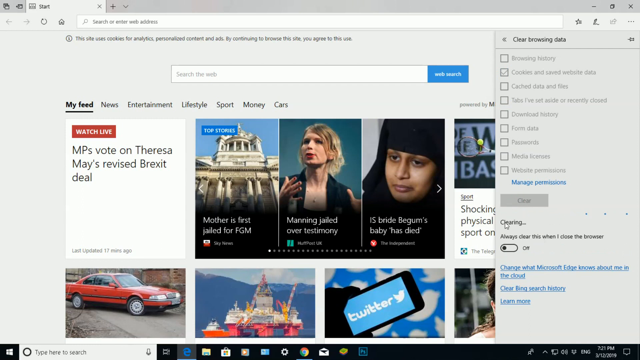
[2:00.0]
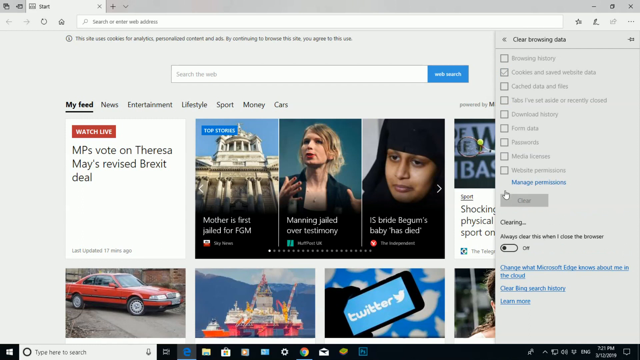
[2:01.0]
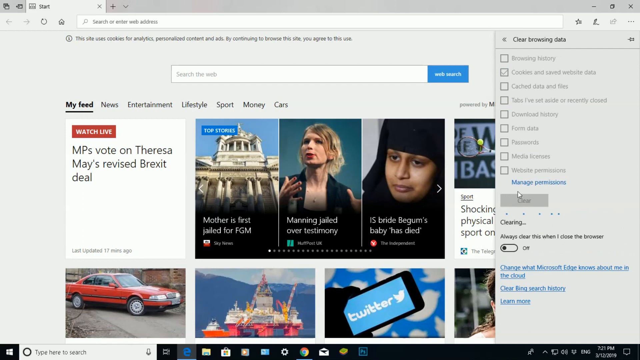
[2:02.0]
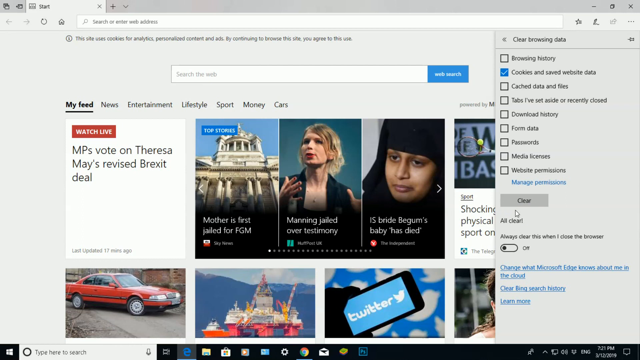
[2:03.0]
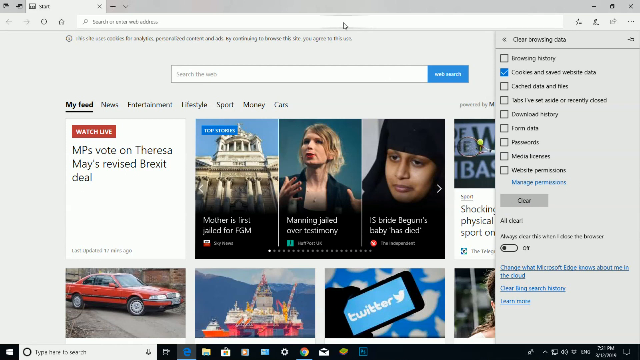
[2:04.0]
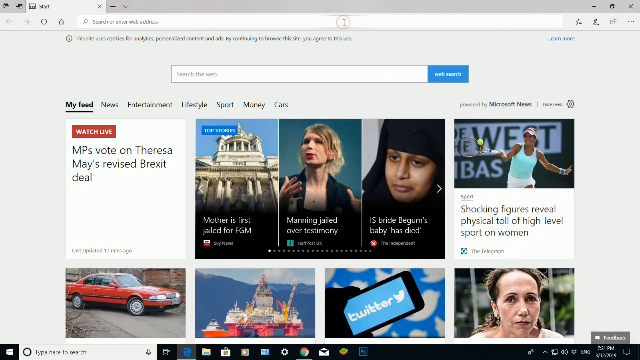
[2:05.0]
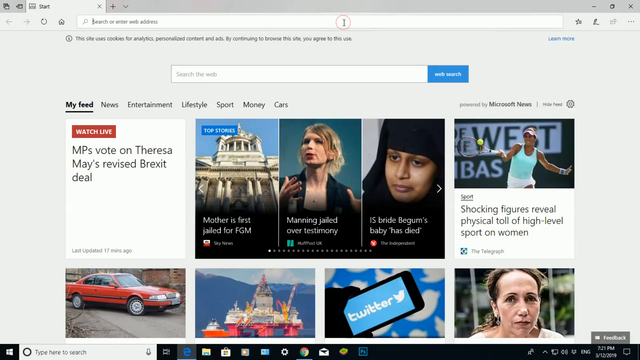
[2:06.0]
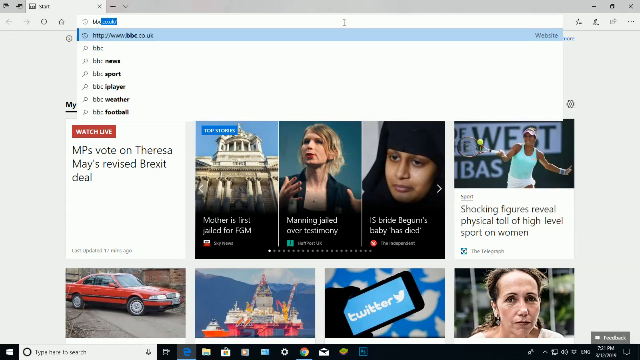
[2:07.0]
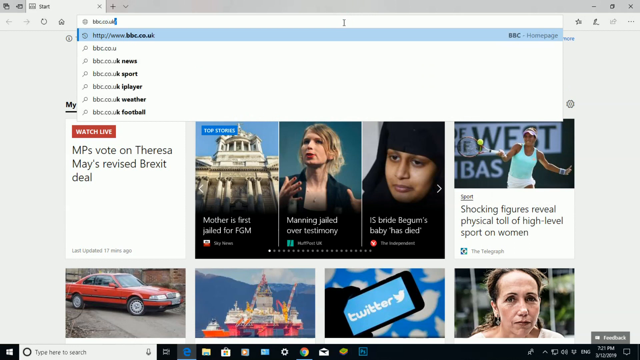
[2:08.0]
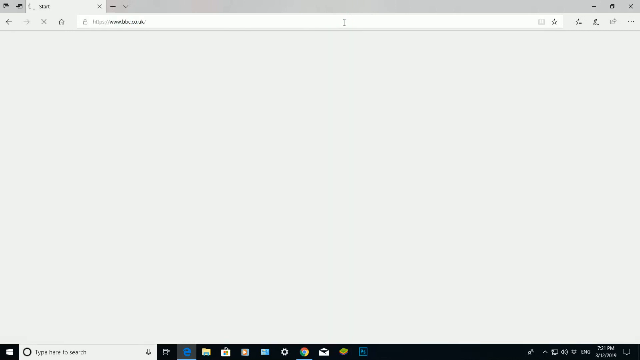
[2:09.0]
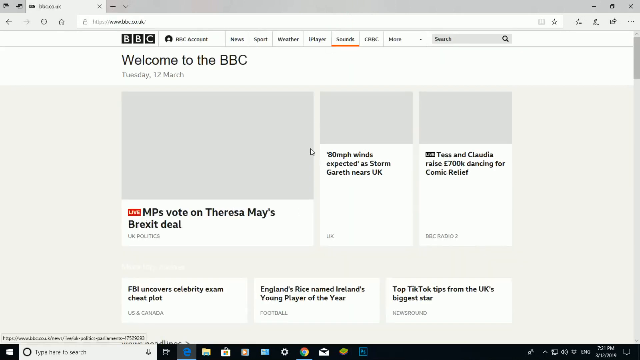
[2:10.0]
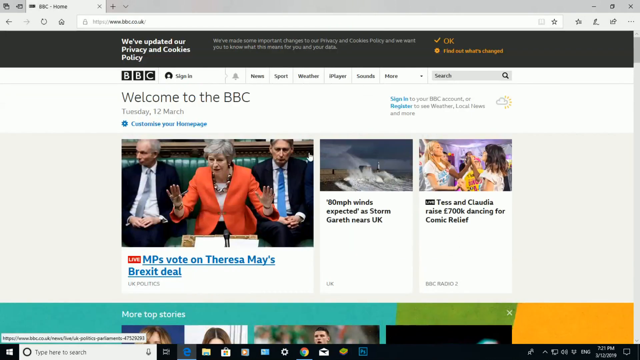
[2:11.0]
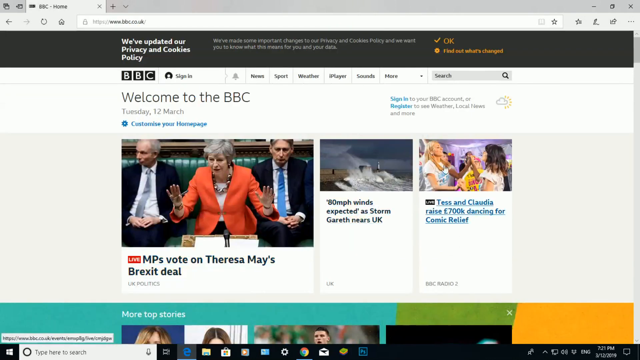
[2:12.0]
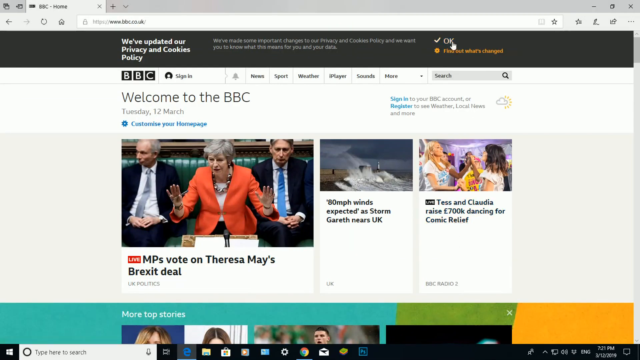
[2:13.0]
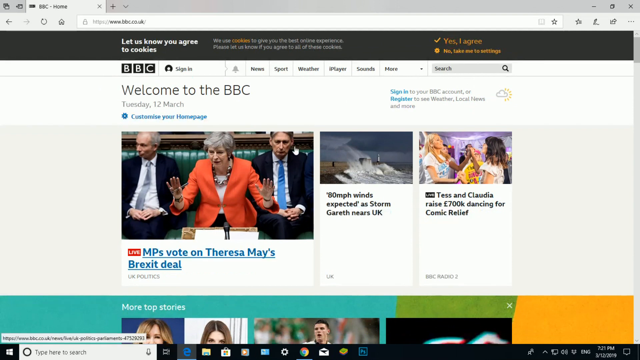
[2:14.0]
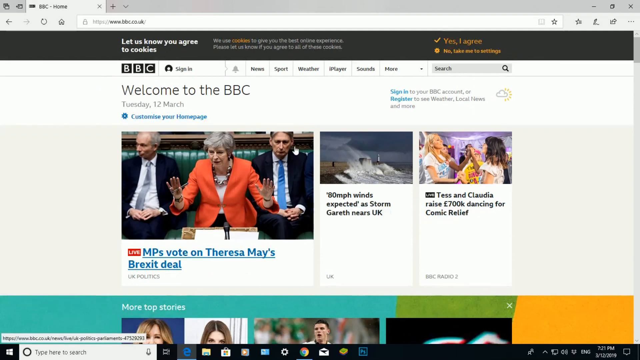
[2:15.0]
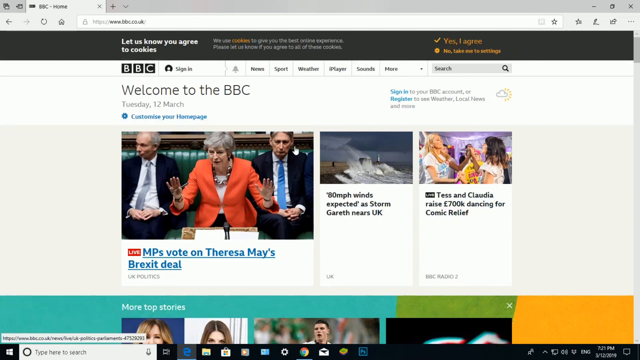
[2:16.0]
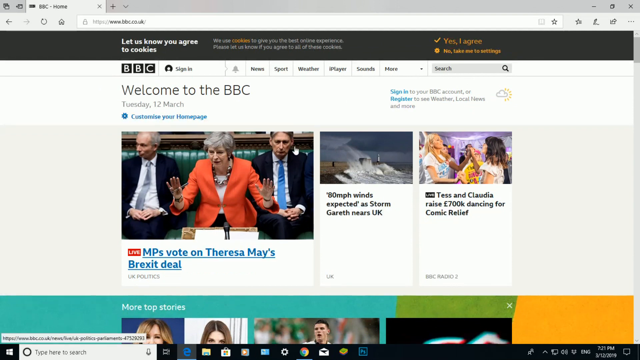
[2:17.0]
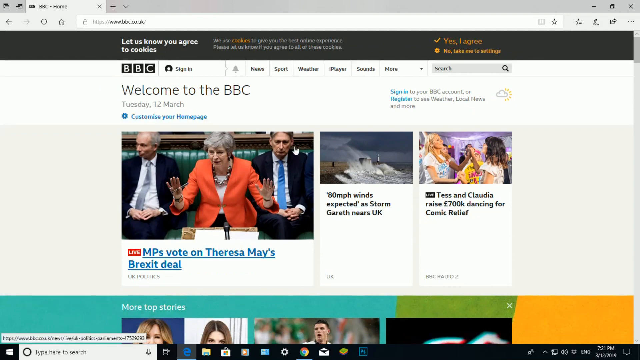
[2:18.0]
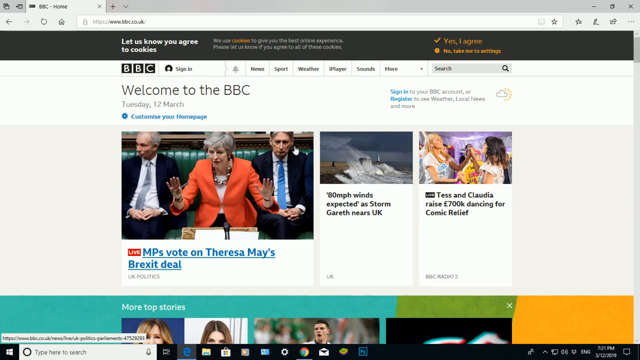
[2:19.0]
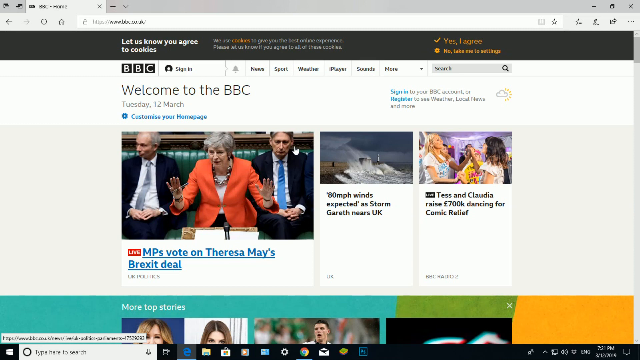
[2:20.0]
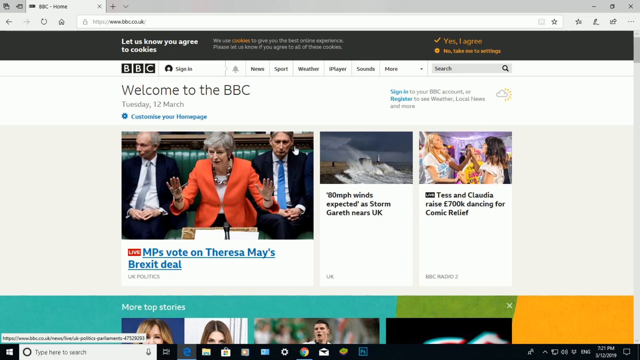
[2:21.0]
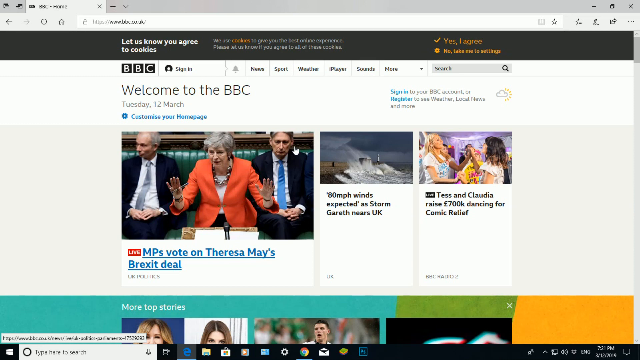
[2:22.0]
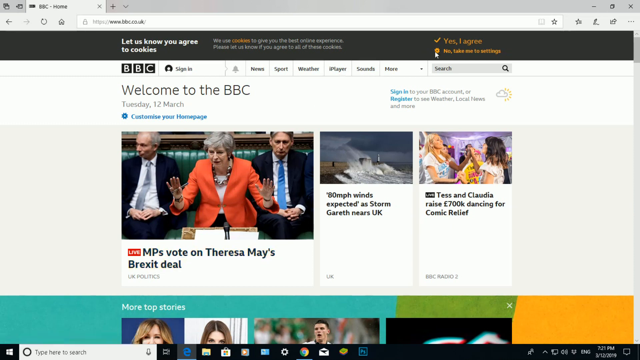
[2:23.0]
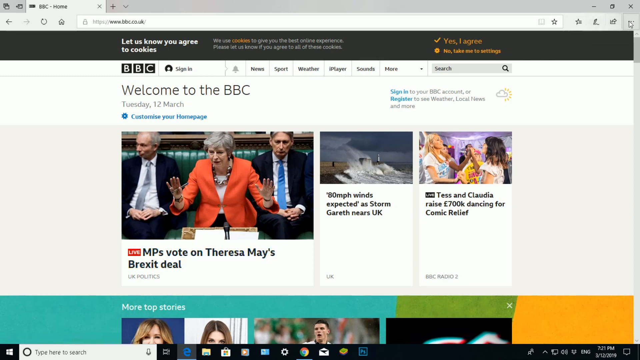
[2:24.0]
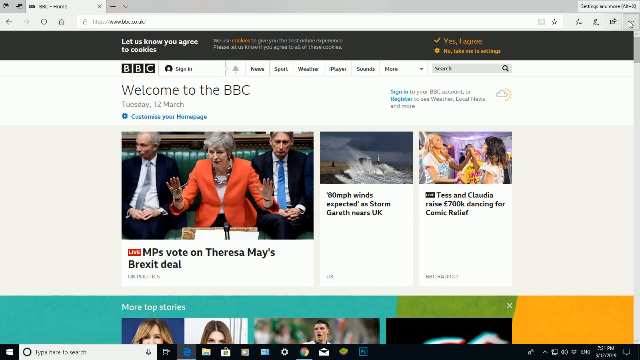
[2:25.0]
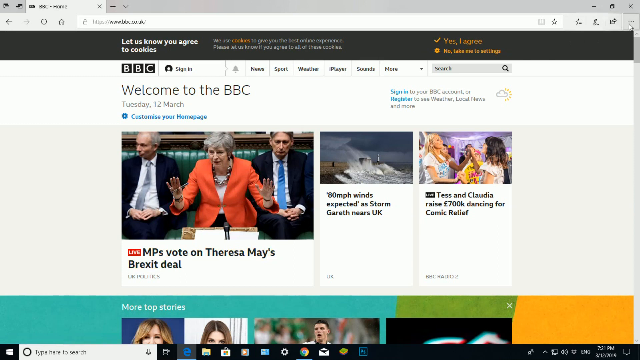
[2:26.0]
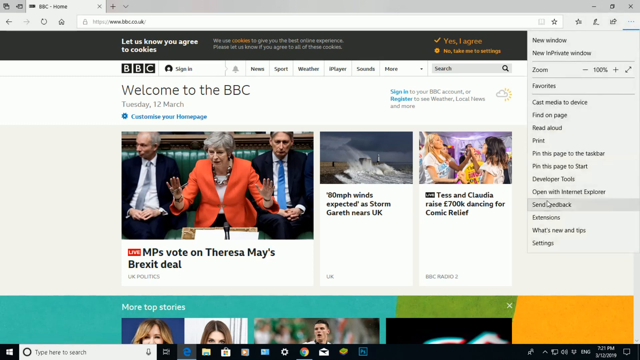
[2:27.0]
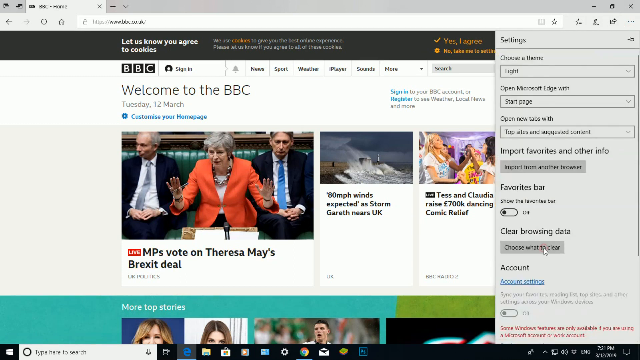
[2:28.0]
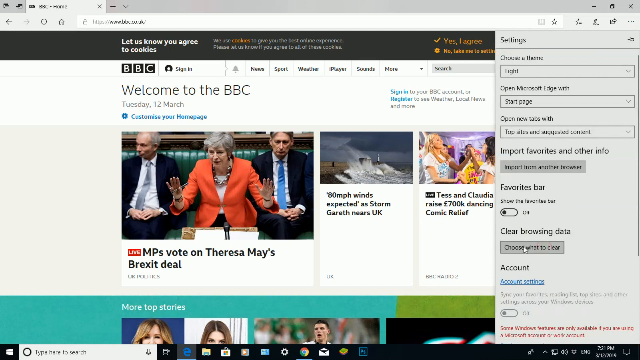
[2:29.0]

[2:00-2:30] An internet browser is open on the Mac system with a panel on the side headed "Clear Browsing Data". The user hovers around that area, and only one of the nine boxes is checked: the second box, "Cookies and Saved Website Data". He moves the mouse to the search bar, clicks it, and types bbc.co.uk. The BBC website opens with the heading "Welcome to BBC", another news website showing many stories in a grid layout, including a top story with a big photo and text beginning "MP's vote on Theresa May's". The user then moves back to the three-dot settings option in the top right corner and clicks Clear Browsing Data.